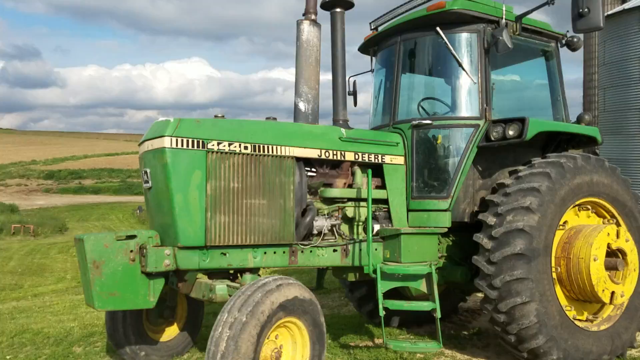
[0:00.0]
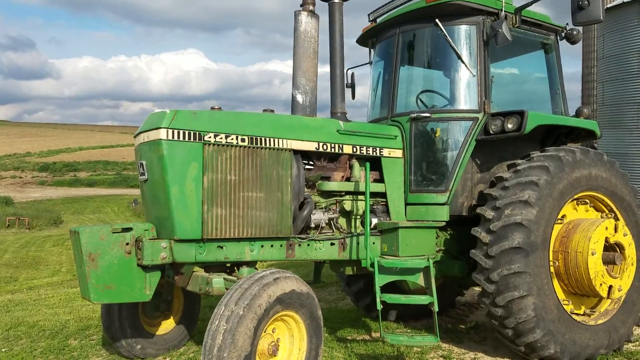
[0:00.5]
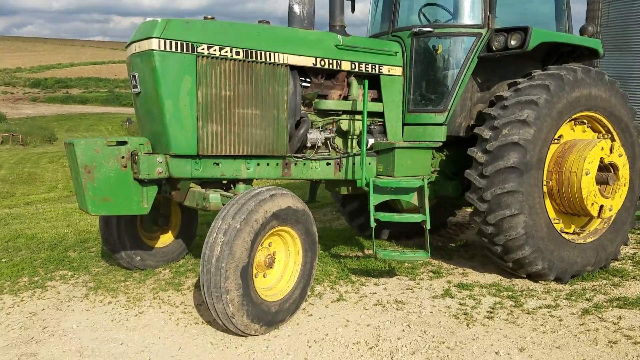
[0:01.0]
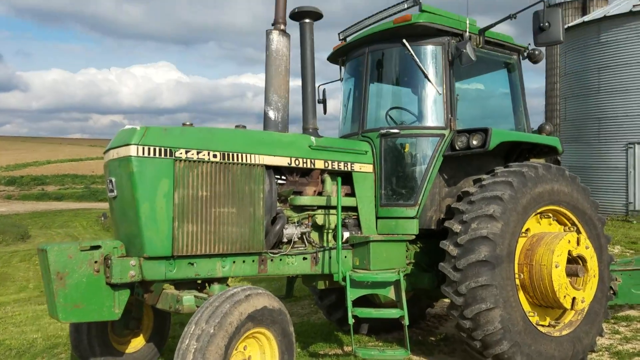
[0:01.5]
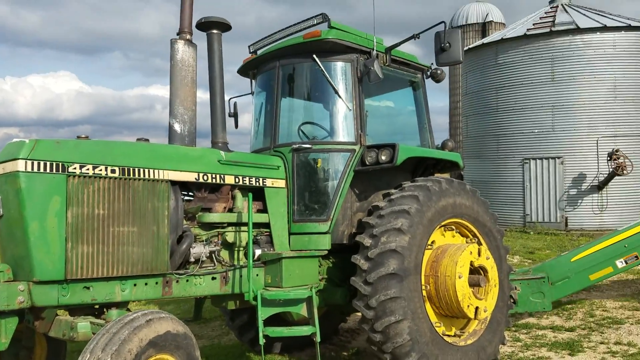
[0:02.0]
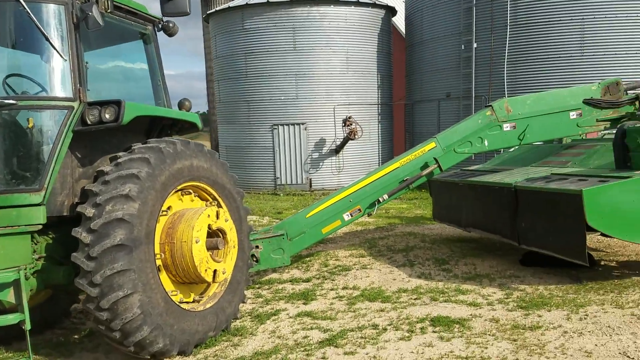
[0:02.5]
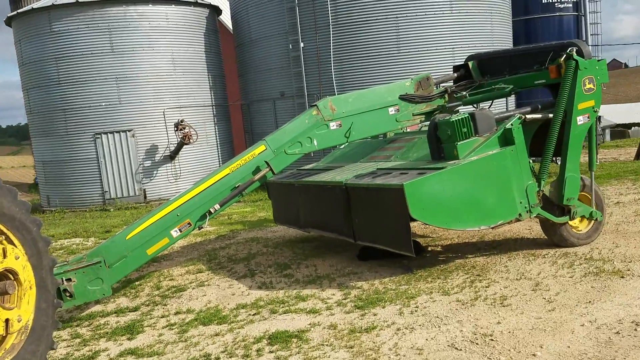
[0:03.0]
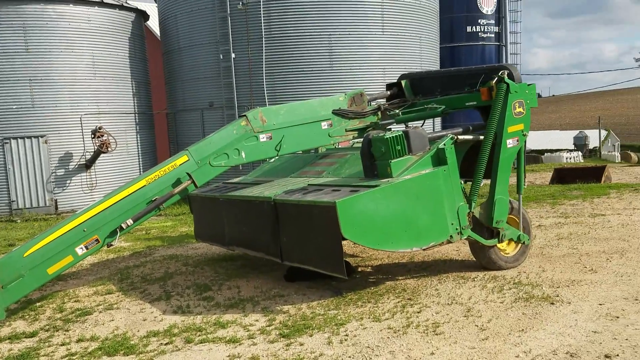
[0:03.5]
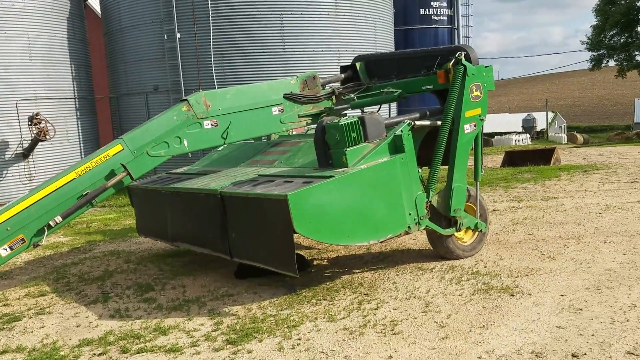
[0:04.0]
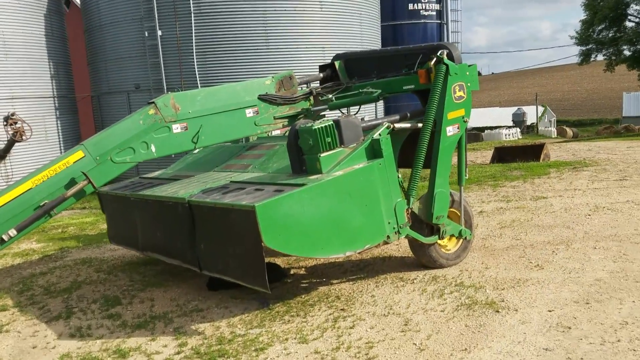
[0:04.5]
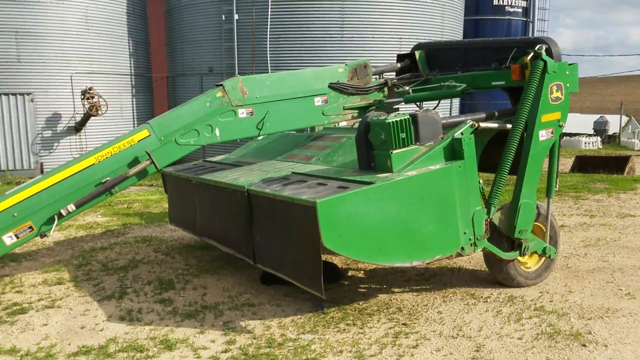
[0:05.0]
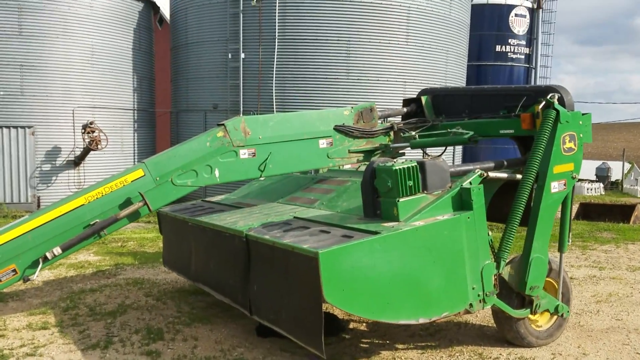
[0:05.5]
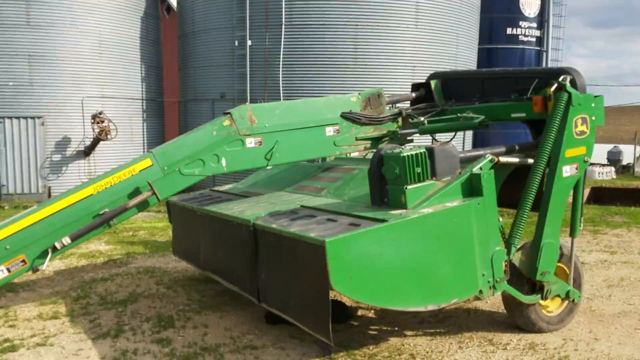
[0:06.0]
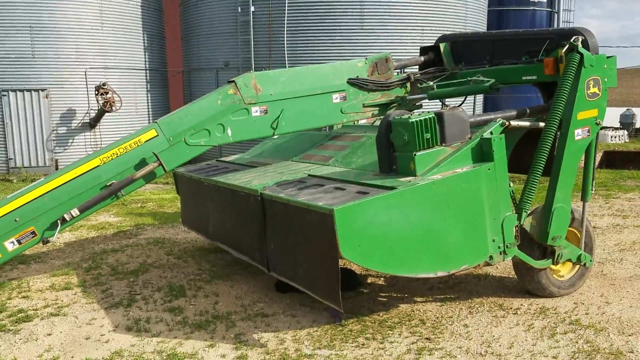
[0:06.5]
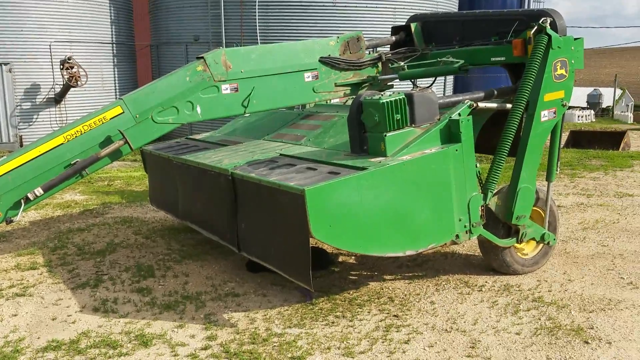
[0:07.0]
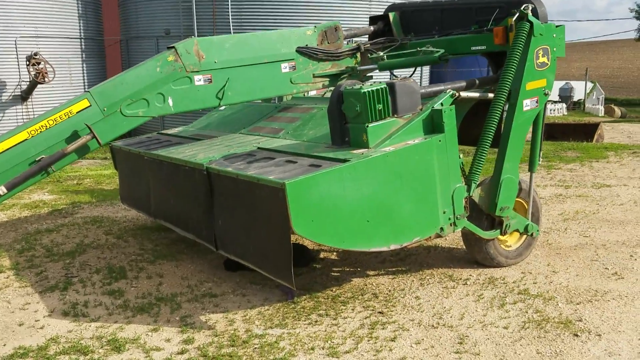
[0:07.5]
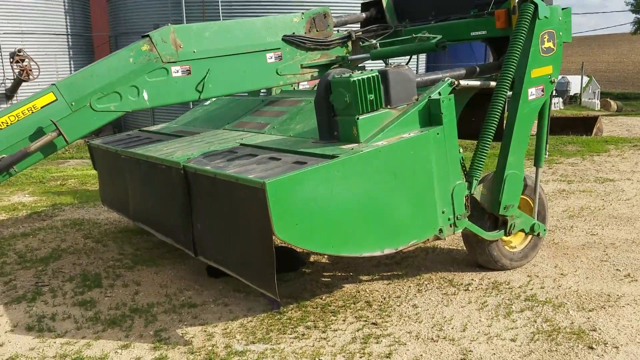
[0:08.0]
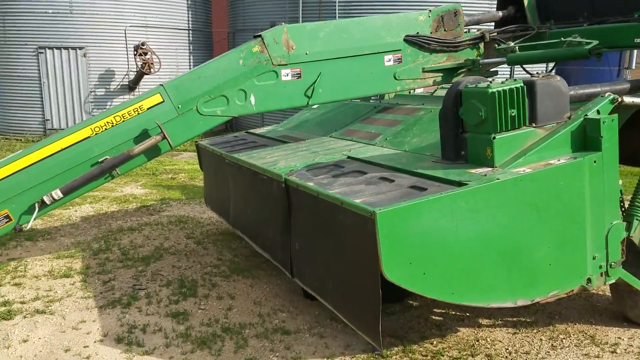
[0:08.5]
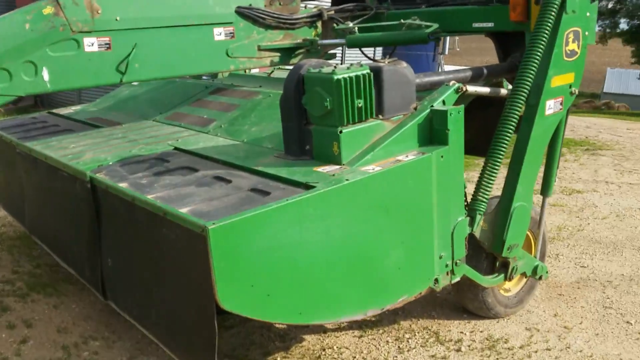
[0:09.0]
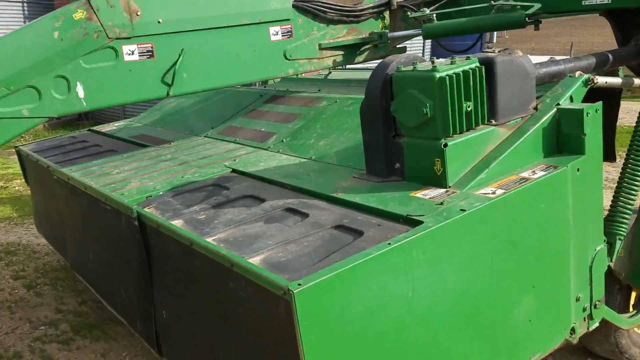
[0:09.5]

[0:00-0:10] A John Deere tractor is shown on farmland. It looks somewhat old but very functional, and it is green. It is pulling what is apparently a combine. The camera waves around a little and shows three silos in the back: two look like they are maybe aluminum, and one looks like stainless steel, possibly a water tank, while the other two are grain storage tanks. The camera then does a close-up of the combine, whose wheels have yellow hubcap-type pieces around the axle.